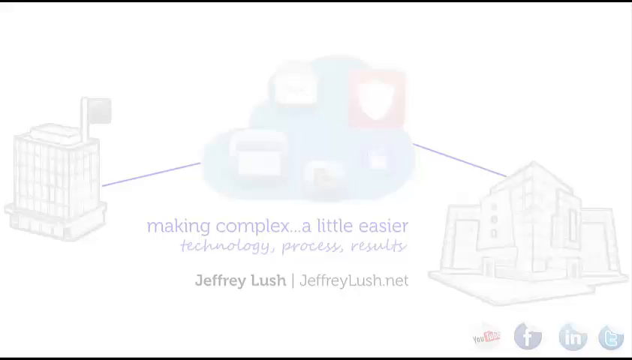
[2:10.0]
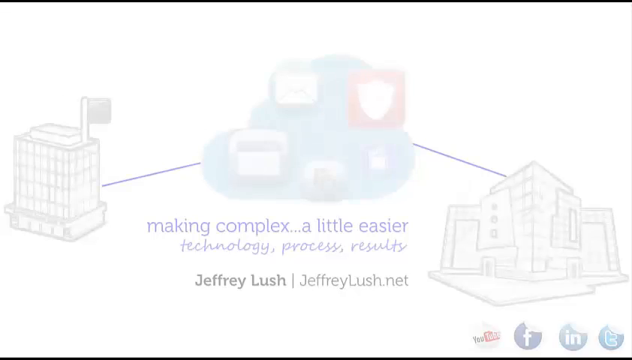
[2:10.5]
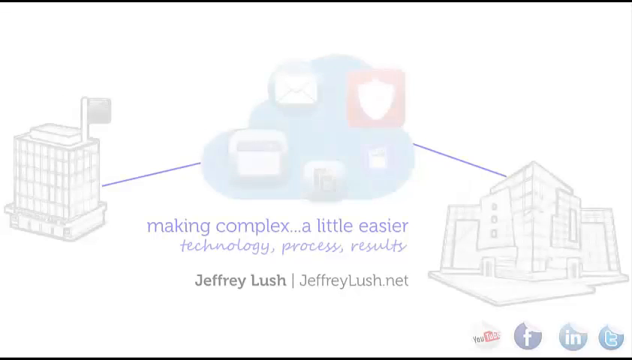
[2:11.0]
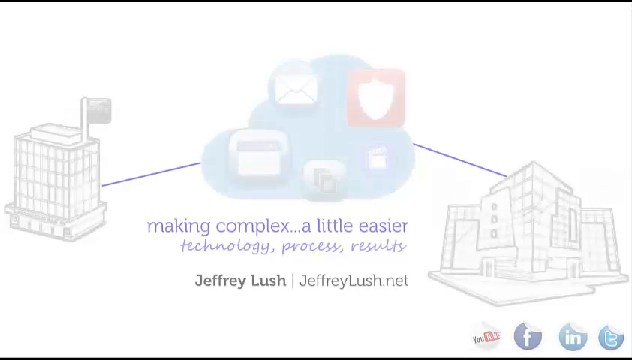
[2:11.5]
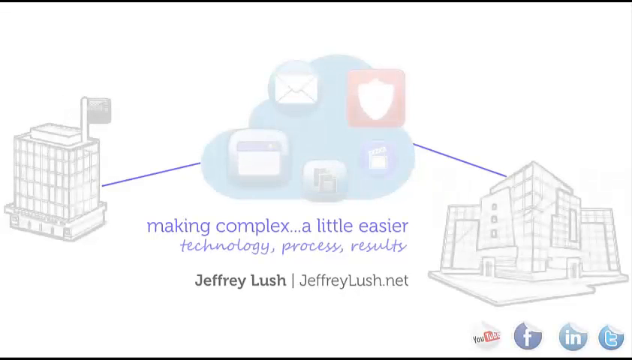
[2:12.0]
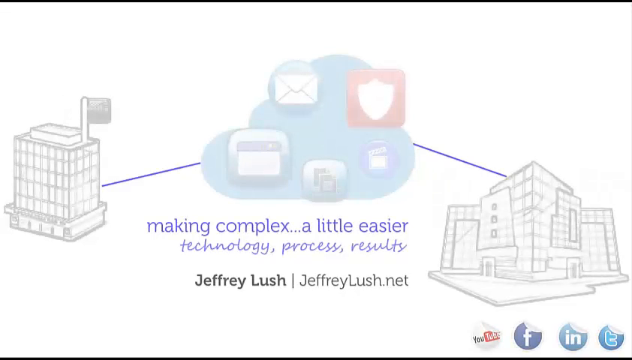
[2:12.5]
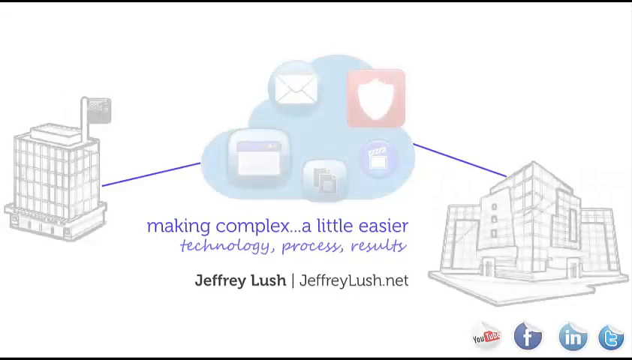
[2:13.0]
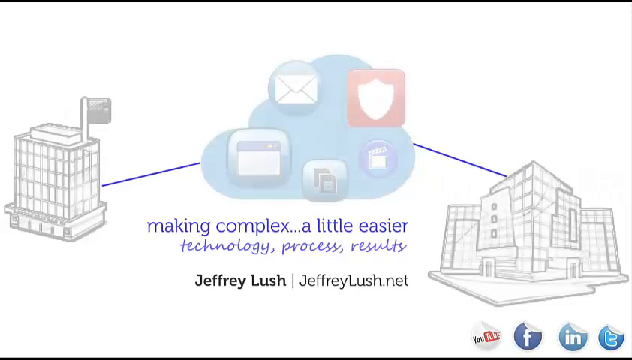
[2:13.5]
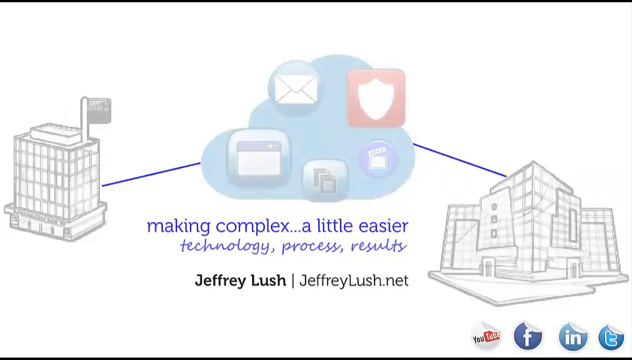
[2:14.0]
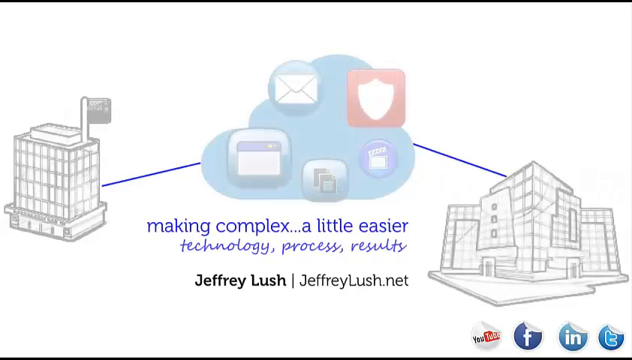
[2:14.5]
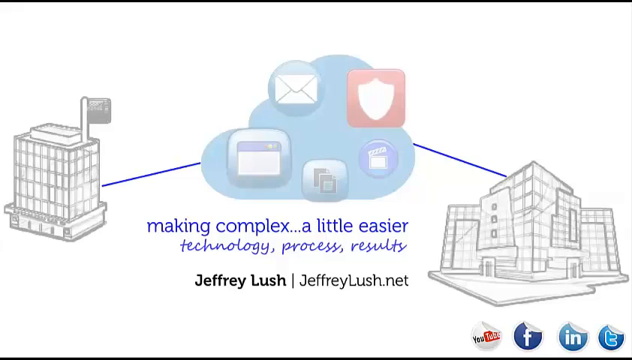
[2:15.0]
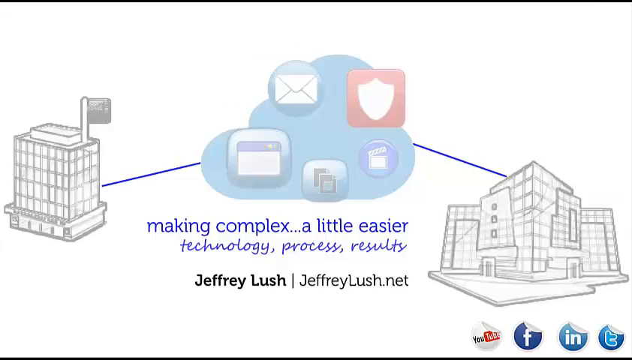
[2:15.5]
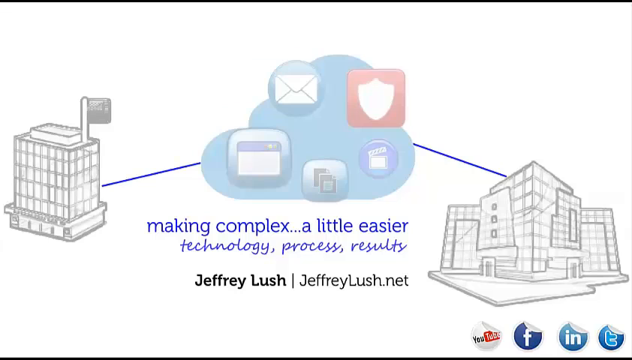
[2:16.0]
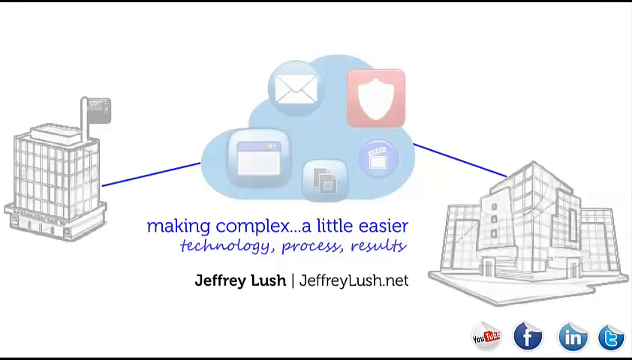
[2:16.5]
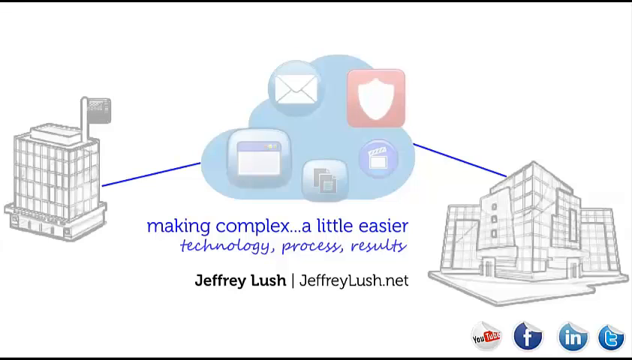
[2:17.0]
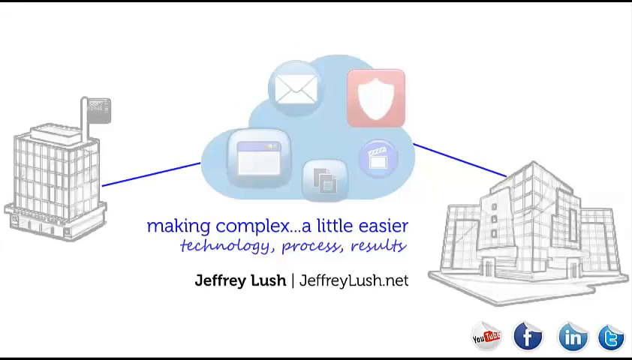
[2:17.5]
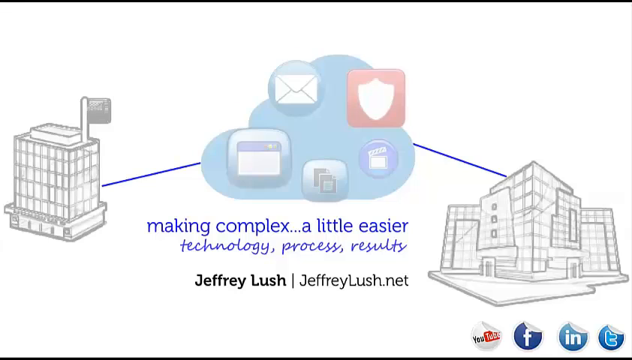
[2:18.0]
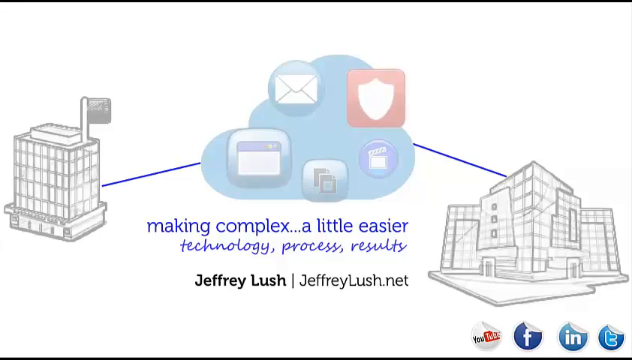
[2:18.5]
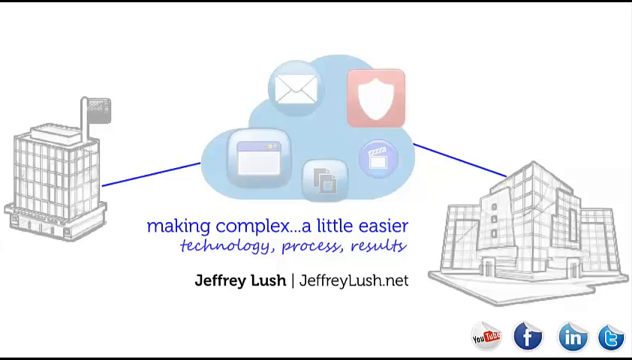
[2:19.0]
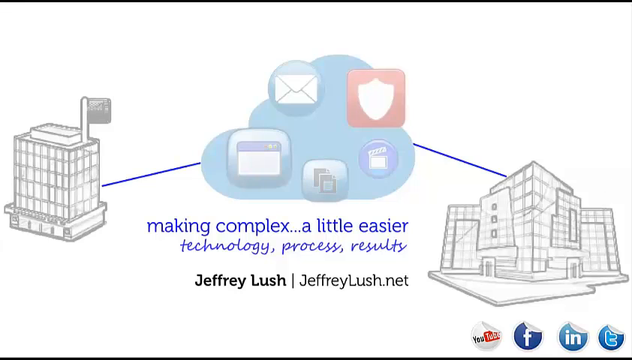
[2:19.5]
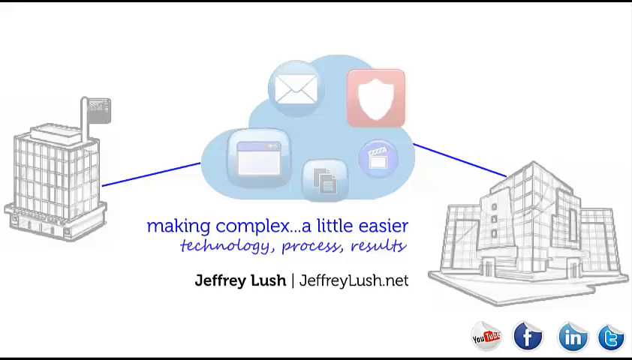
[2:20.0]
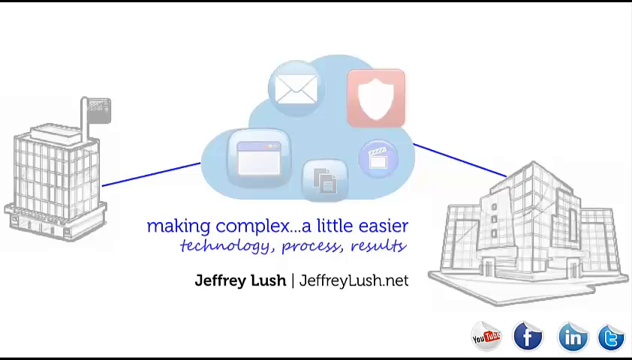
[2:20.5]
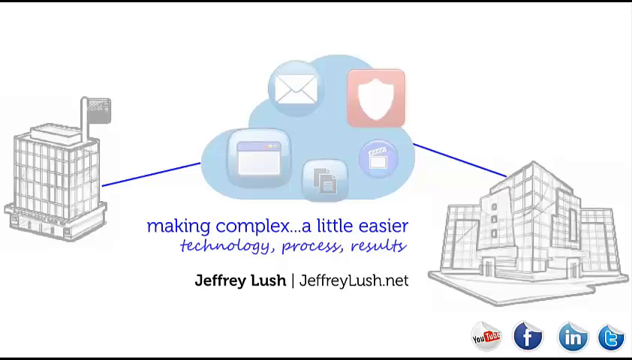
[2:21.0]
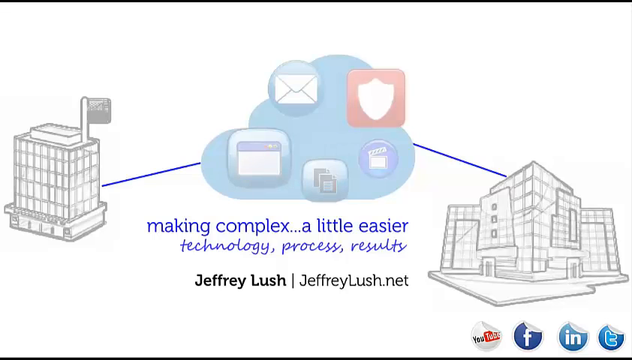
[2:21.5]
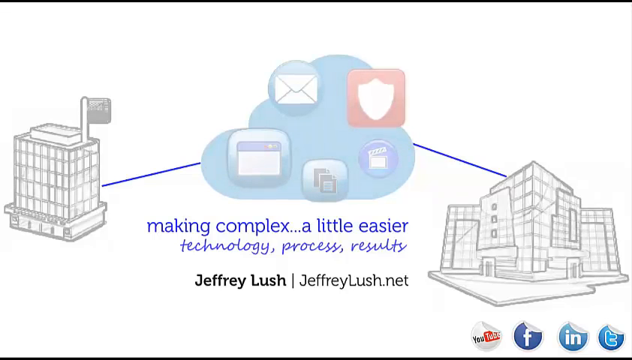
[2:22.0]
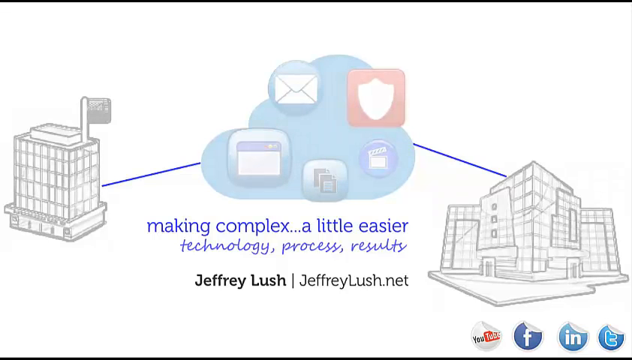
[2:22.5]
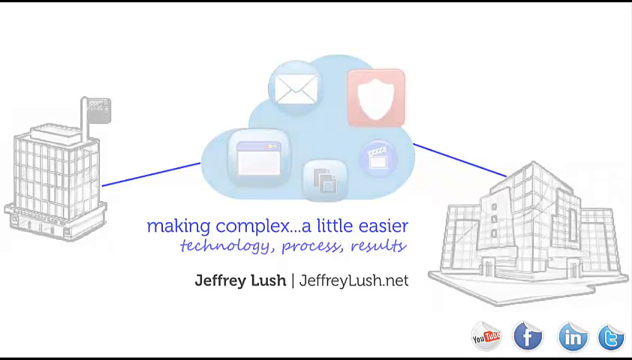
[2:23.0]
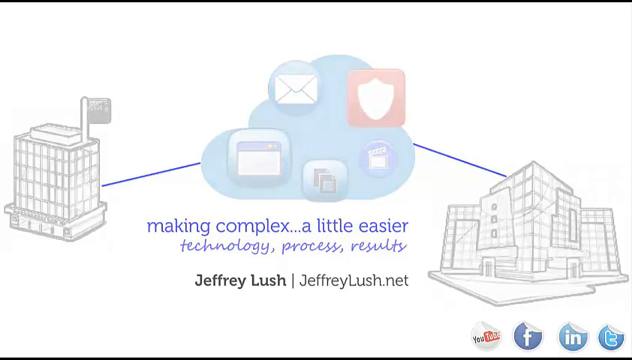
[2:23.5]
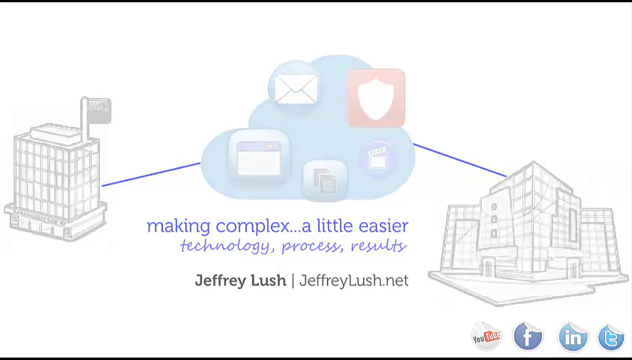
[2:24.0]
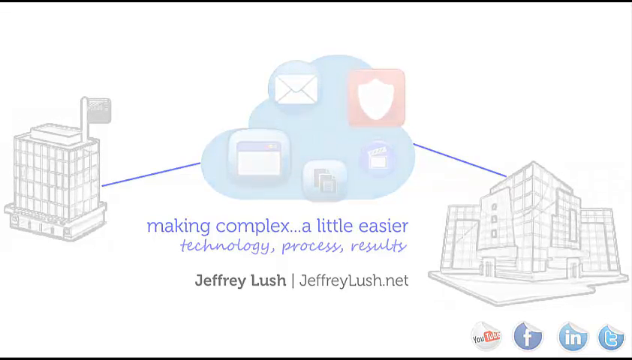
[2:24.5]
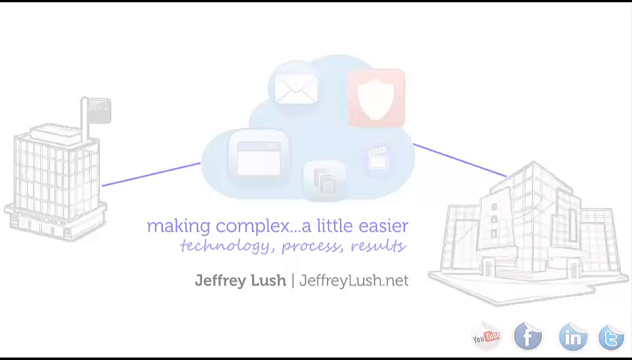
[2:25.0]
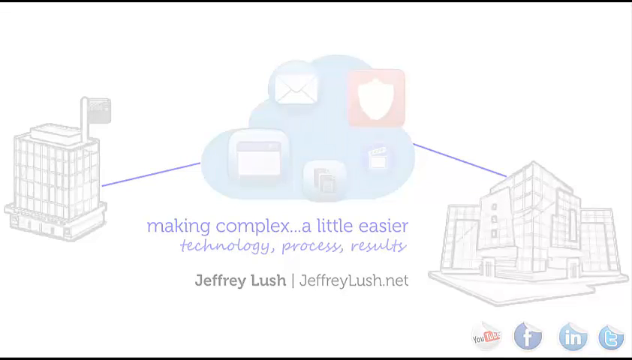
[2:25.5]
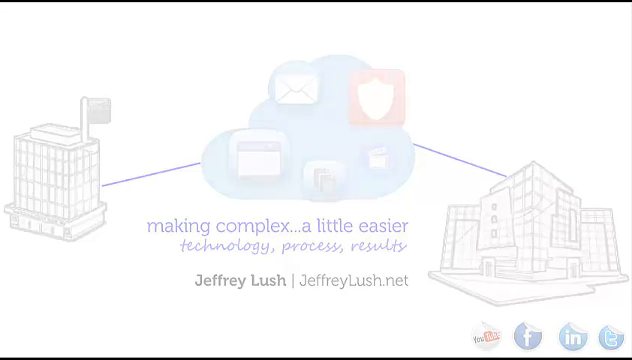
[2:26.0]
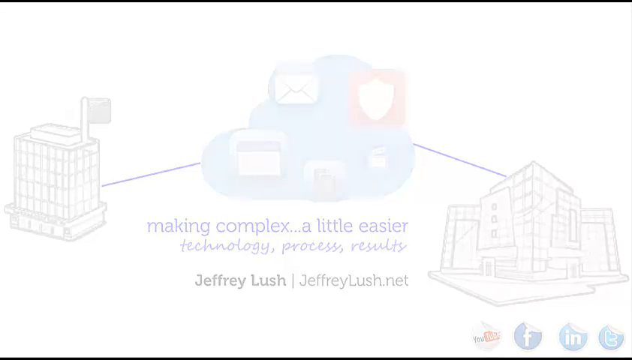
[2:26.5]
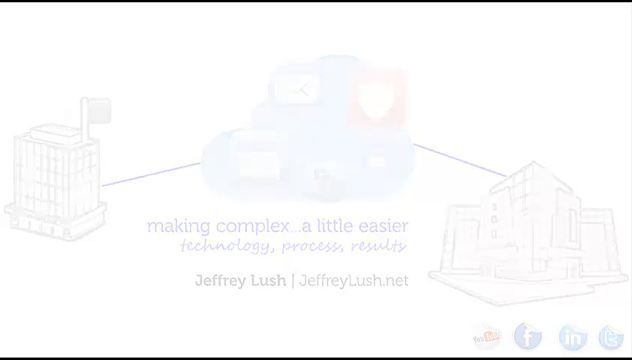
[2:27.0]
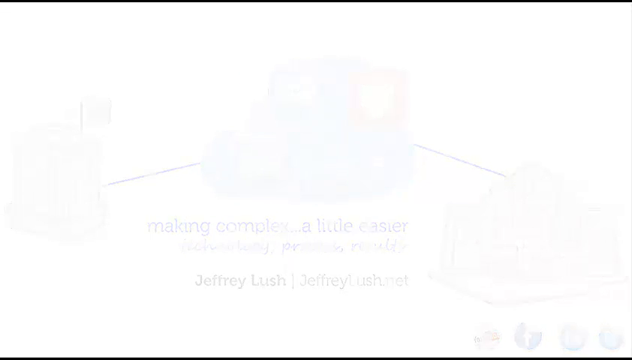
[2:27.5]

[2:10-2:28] Against a white background, images gradually fade onto the screen. On the middle left is a multi-story high-rise building sketched in gray, with a flag on the right side of its roof waving to the right. A blue line connects it to the middle image, which looks like a blue cloud with various symbols on top of it: an email bubble, a shield shape, a director's cut tool, a file symbol and a window symbol. Another blue line runs diagonally down to the lower right of the screen to another multi-story building, this one with two smaller multi-story buildings connected on either side, also sketched in gray. Below that are four bubbles, from left to right YouTube, Facebook, Instagram and Twitter. Below the cloud, blue words read "making complex... a little easier", and below that, in a blue script font, "technology, process, results". Below that, black text reads "Jeffrey Lush, JeffreyLush.net". The image comes fully into focus and stays on screen for a few moments, then gradually fades away to white.